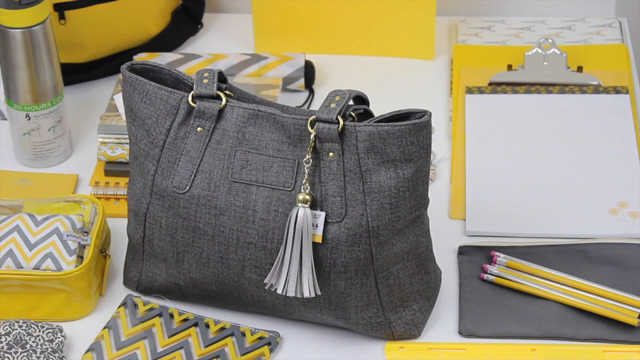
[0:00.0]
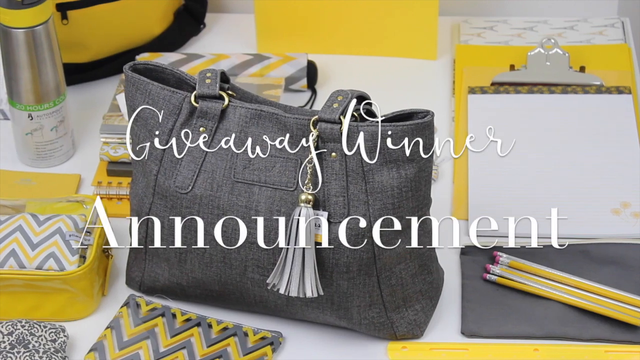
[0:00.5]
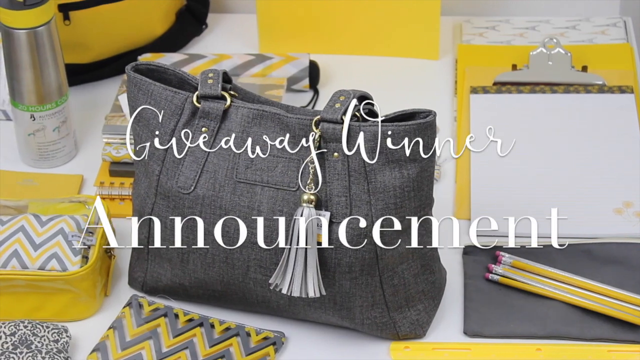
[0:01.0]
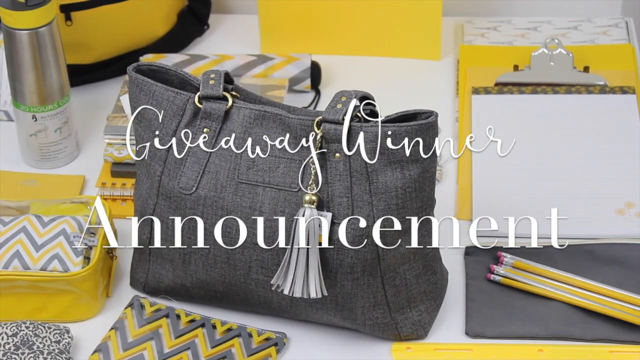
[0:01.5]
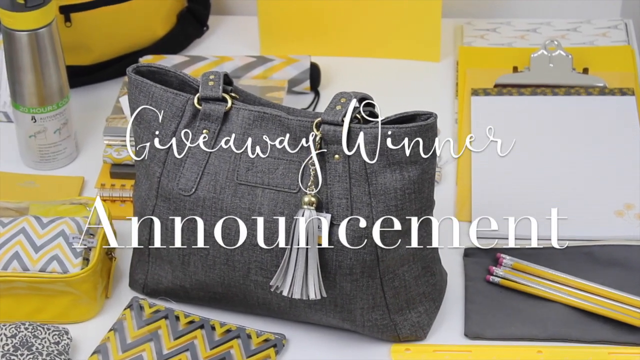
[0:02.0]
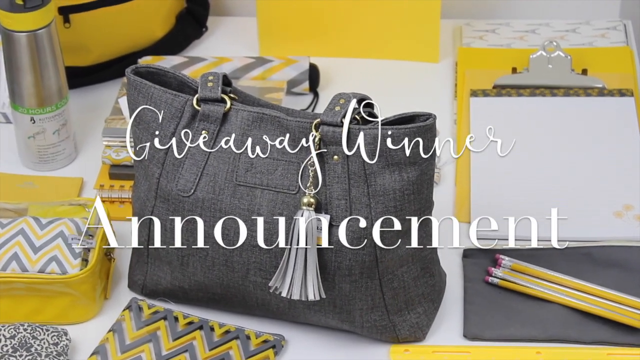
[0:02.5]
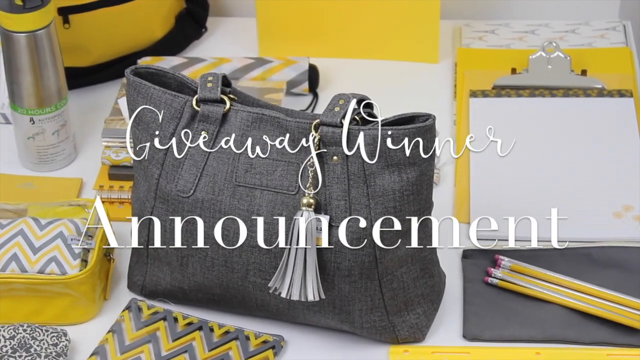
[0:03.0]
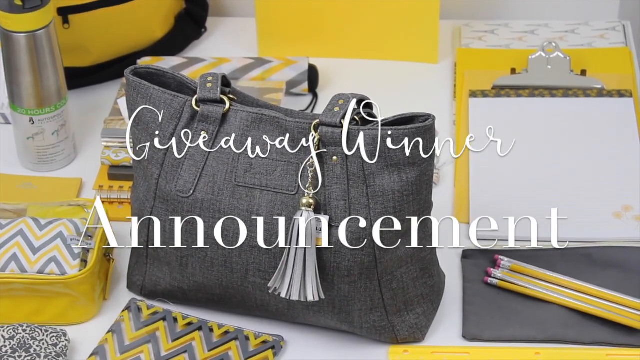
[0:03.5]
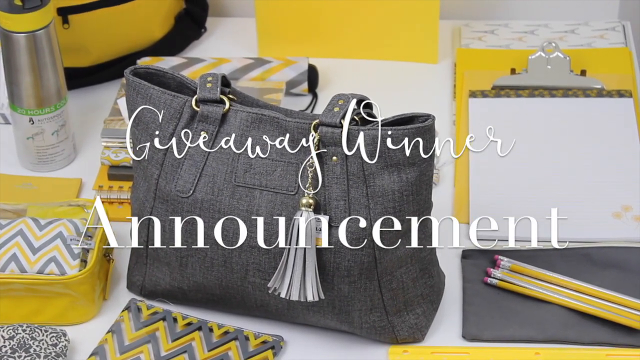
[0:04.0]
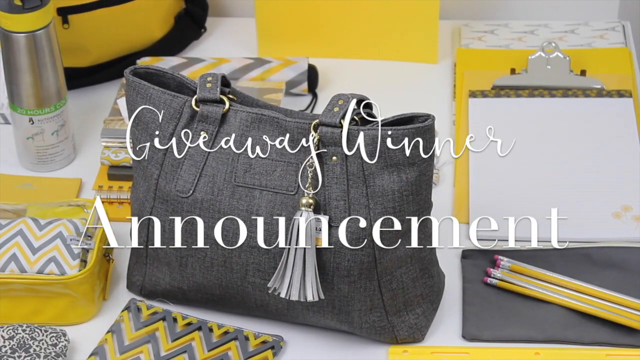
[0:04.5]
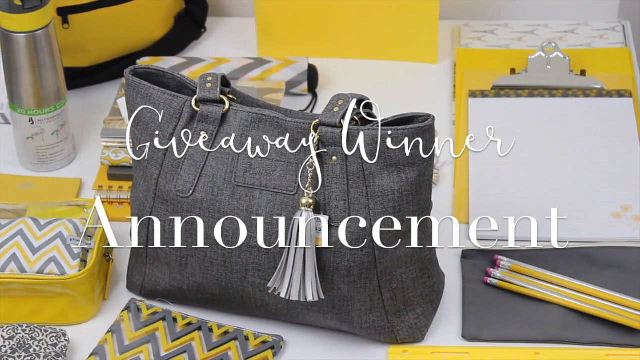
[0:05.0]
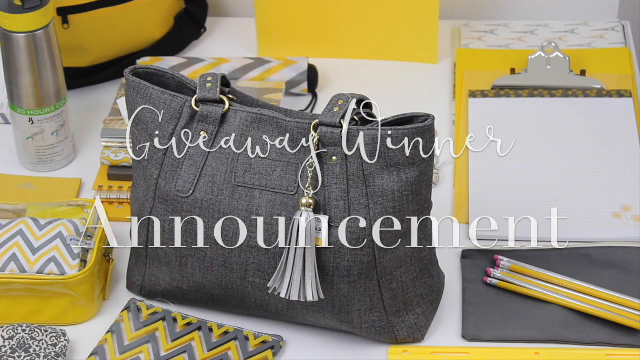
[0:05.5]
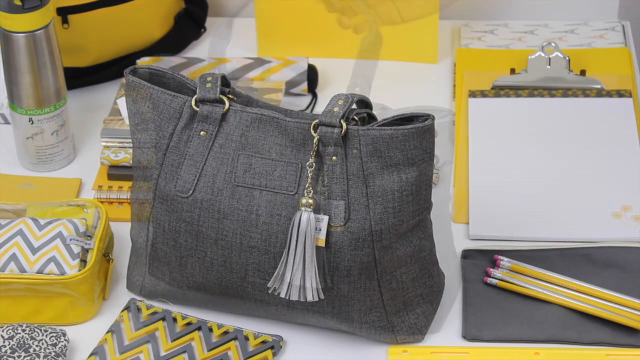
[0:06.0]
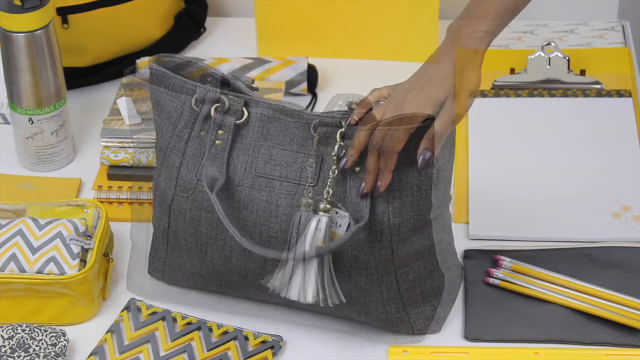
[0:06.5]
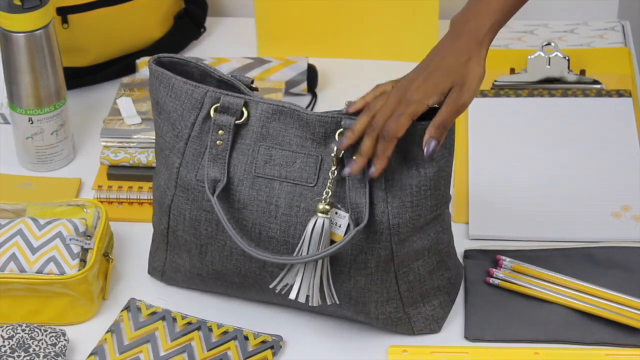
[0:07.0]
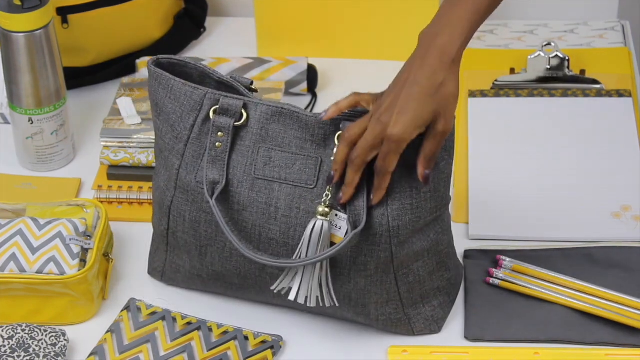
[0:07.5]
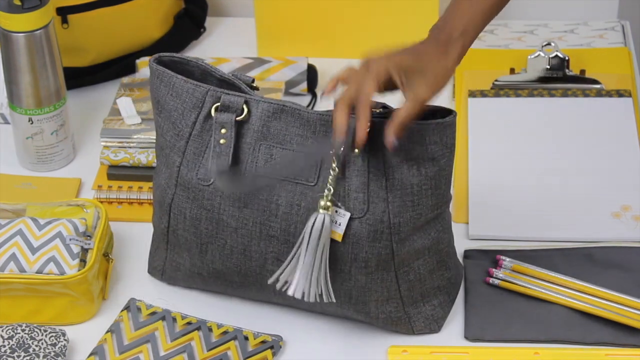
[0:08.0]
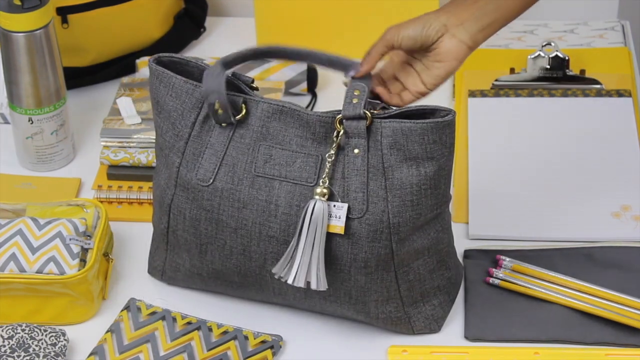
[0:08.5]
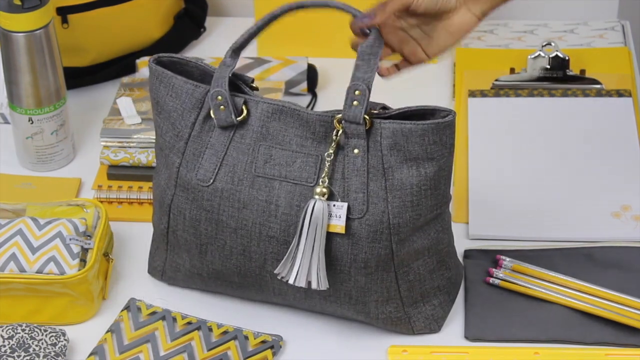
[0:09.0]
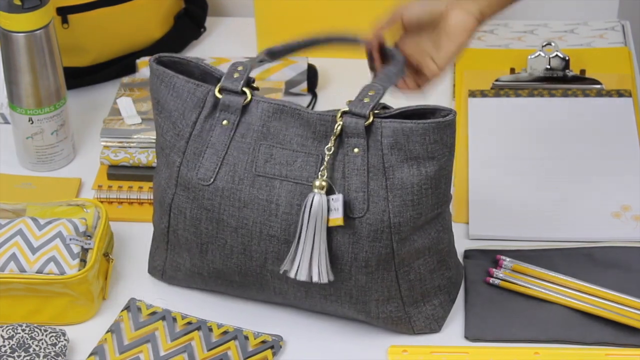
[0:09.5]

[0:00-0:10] The video opens on a gray handbag with a tassel on it, resting on a white table. The table has a heavy yellow theme: pencils, a yellow clipboard, yellow paper, yellow pencil cases, yellow everywhere. A title pops up, and an African-American hand comes in and adjusts the handles for a moment. There may be a book bag in the top left-hand corner and some sort of metal drinking vessel with a little top on it, along with many other items that cannot be identified.